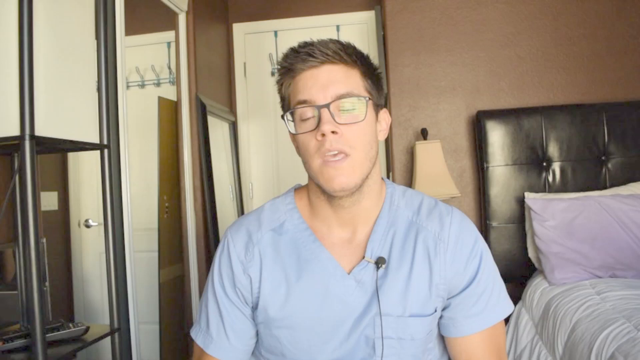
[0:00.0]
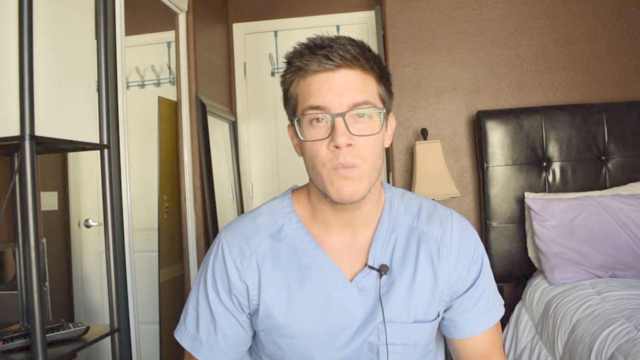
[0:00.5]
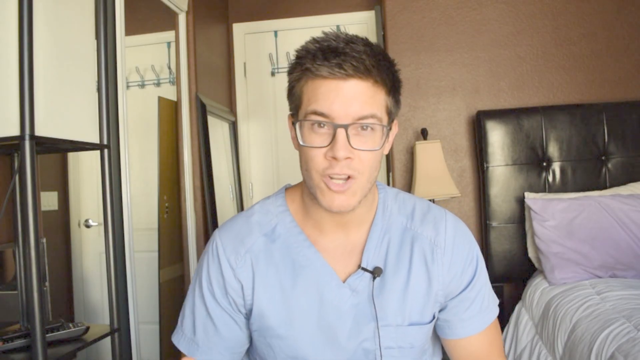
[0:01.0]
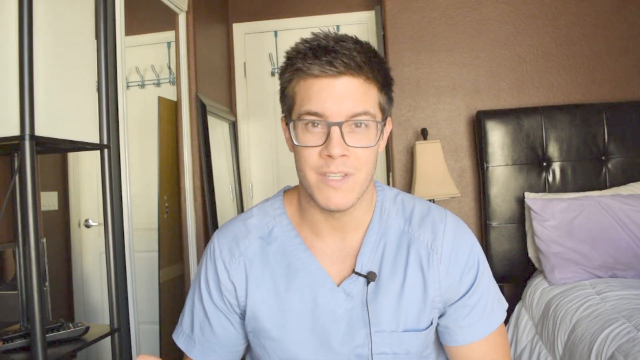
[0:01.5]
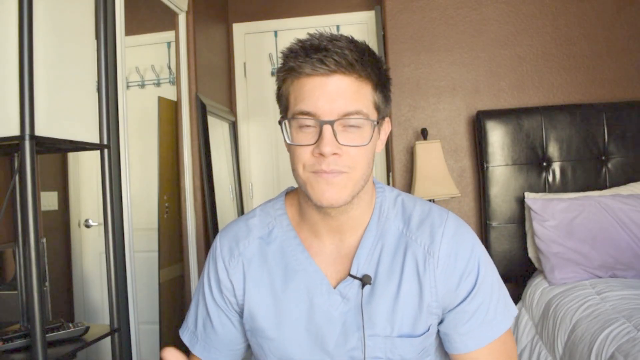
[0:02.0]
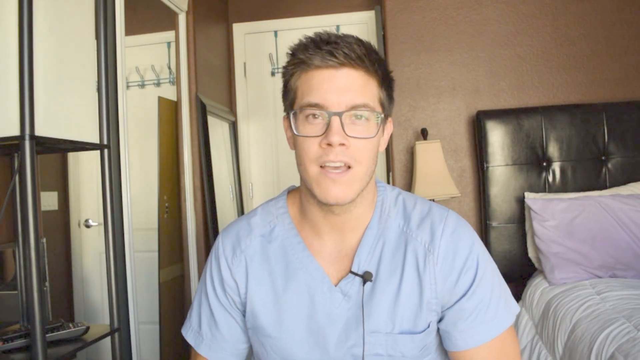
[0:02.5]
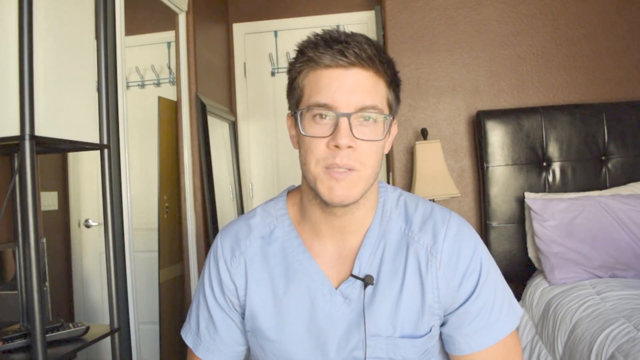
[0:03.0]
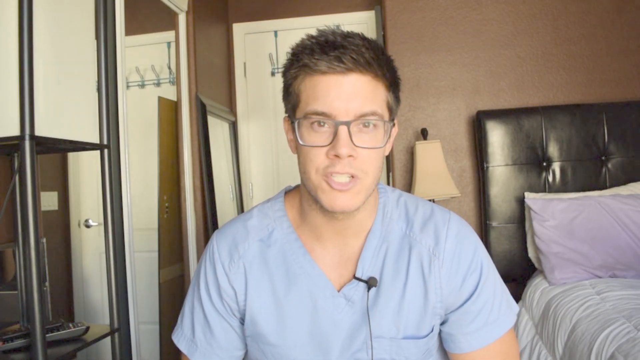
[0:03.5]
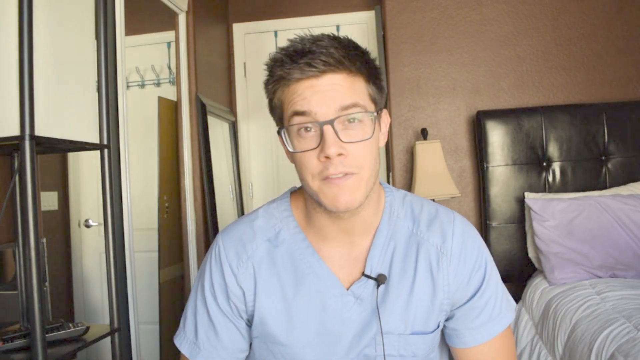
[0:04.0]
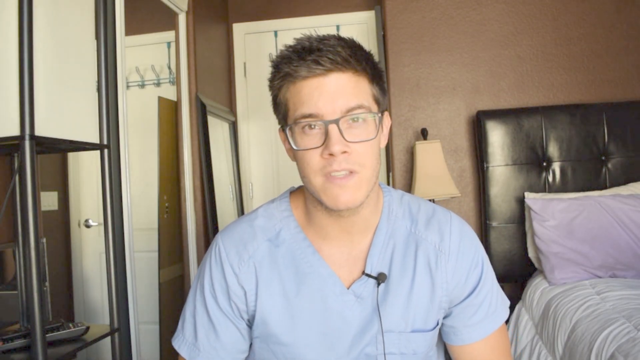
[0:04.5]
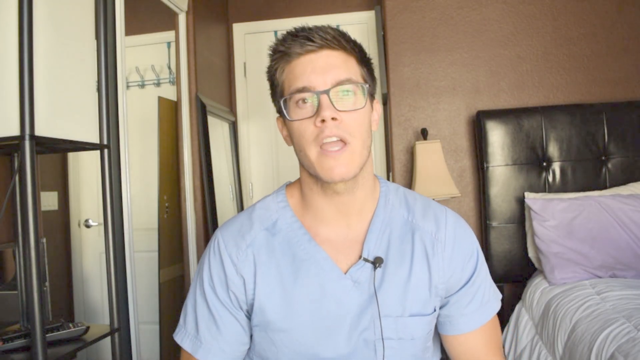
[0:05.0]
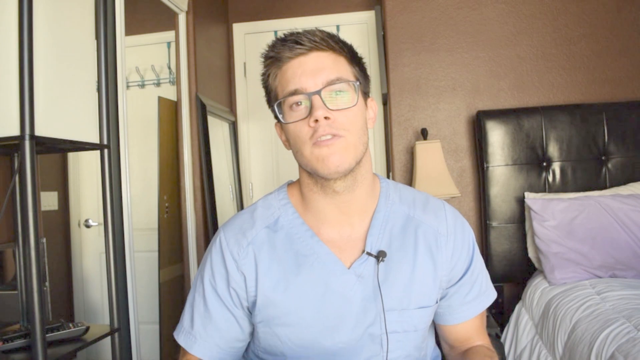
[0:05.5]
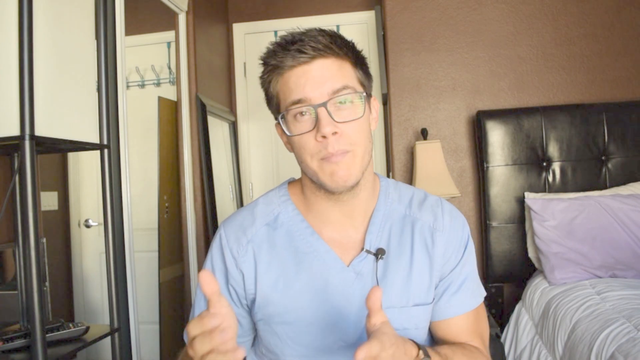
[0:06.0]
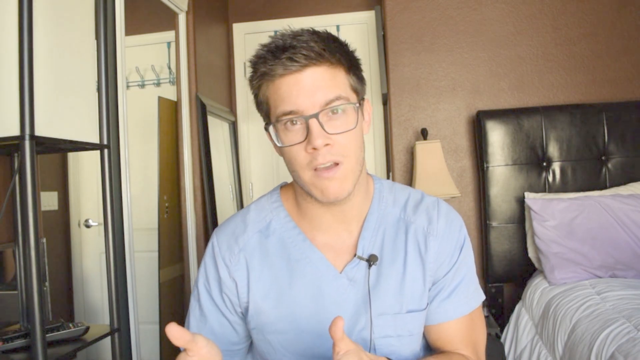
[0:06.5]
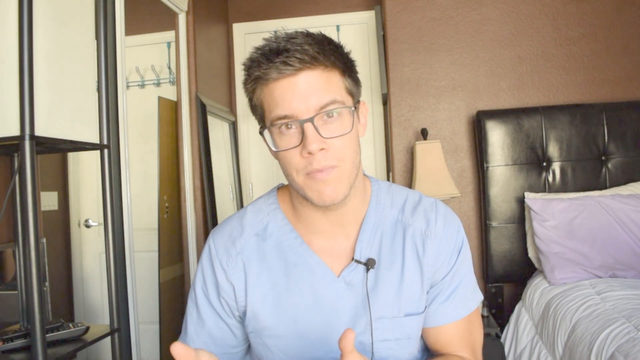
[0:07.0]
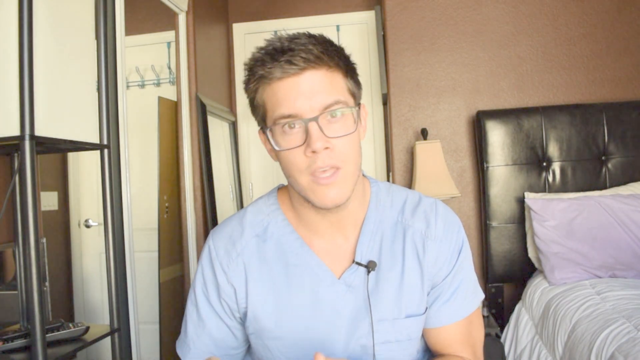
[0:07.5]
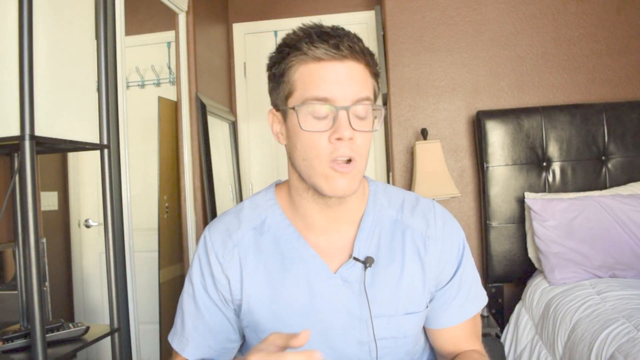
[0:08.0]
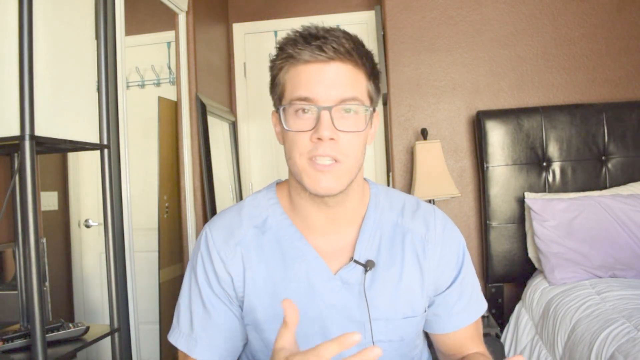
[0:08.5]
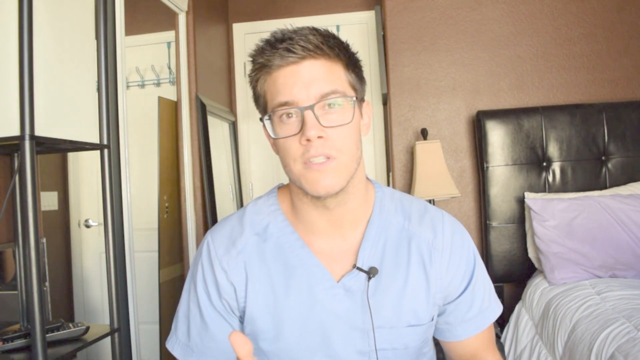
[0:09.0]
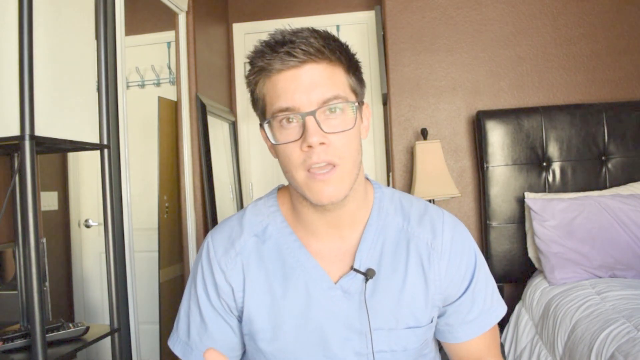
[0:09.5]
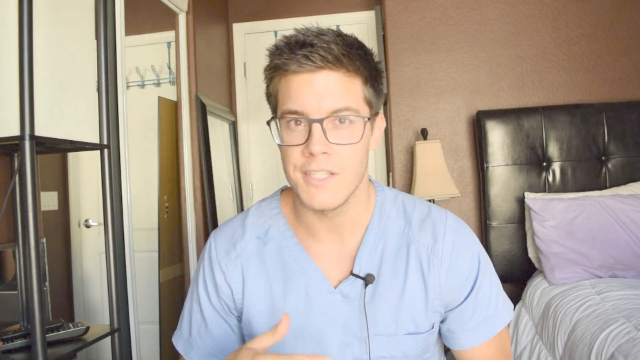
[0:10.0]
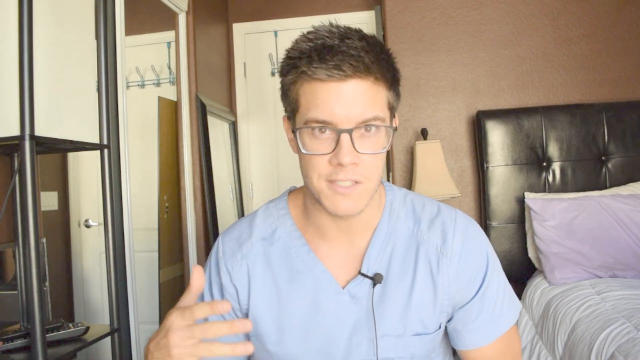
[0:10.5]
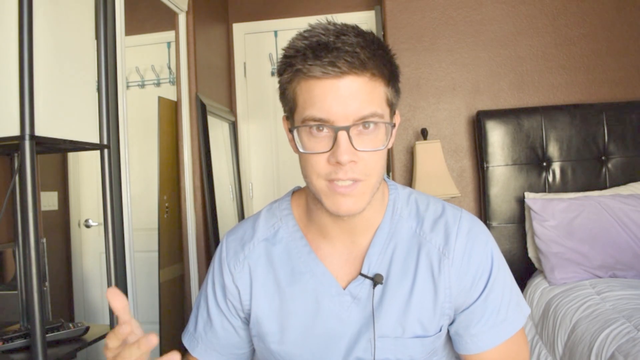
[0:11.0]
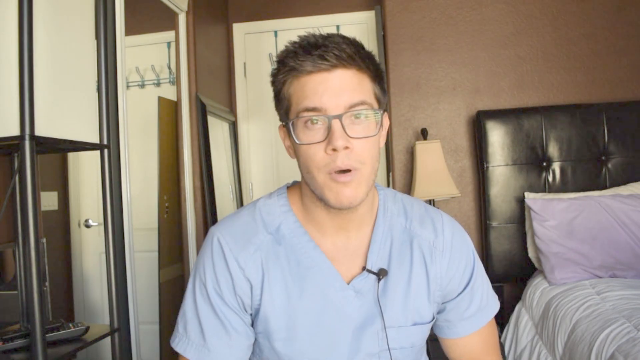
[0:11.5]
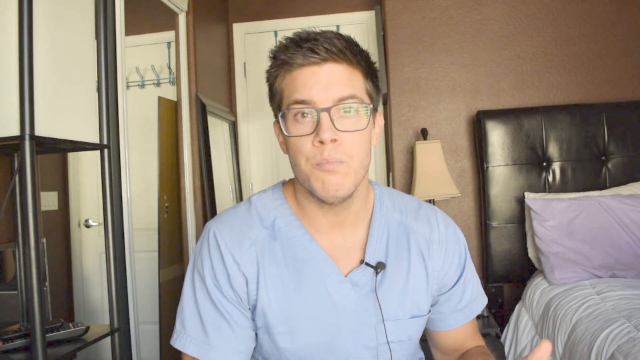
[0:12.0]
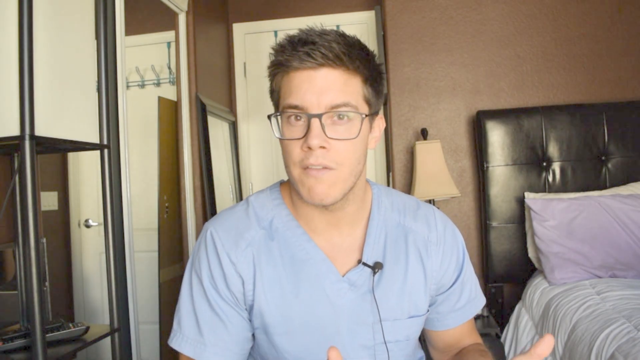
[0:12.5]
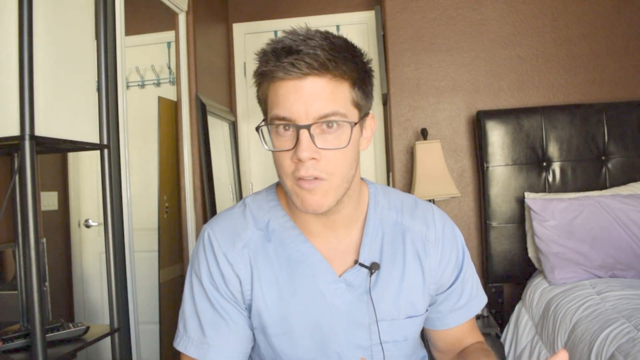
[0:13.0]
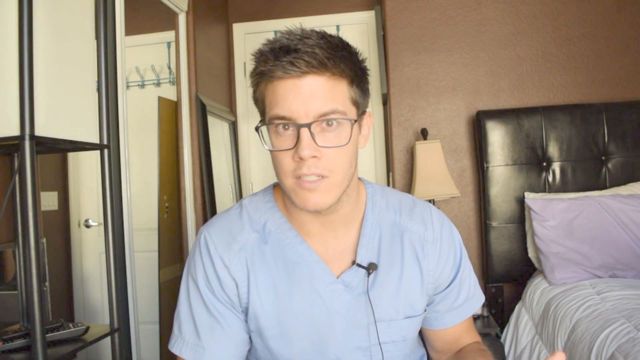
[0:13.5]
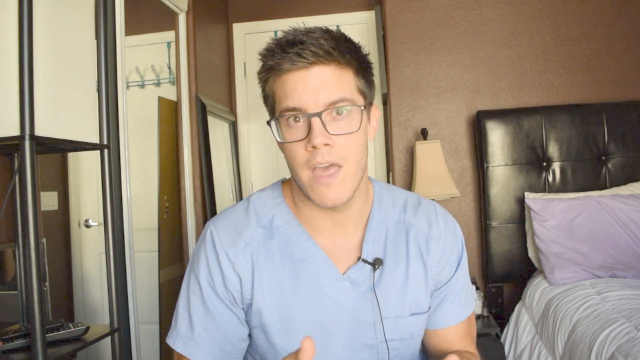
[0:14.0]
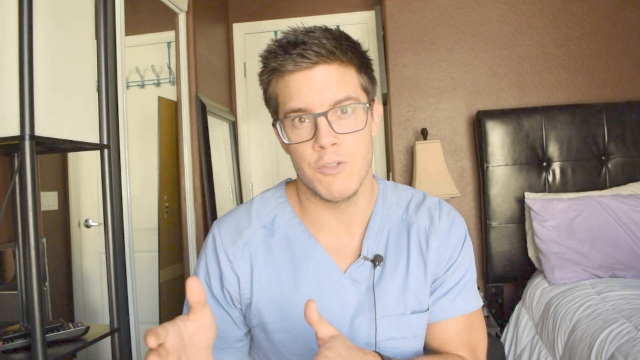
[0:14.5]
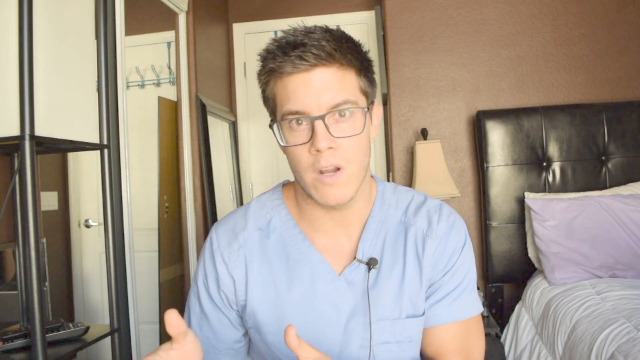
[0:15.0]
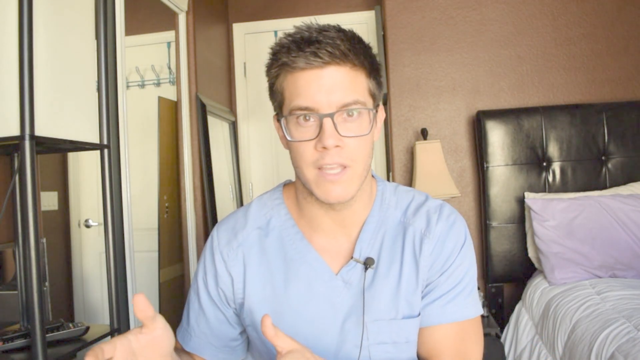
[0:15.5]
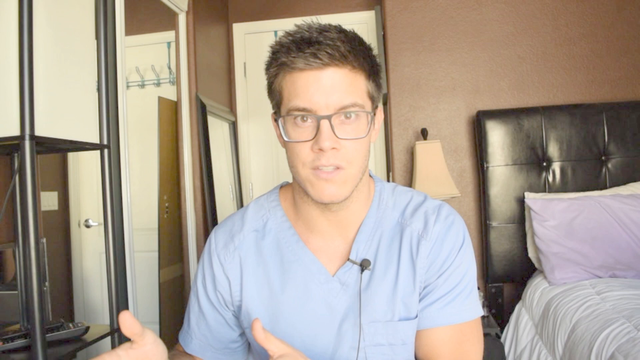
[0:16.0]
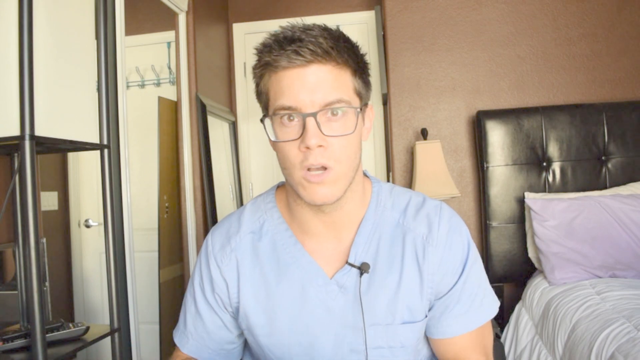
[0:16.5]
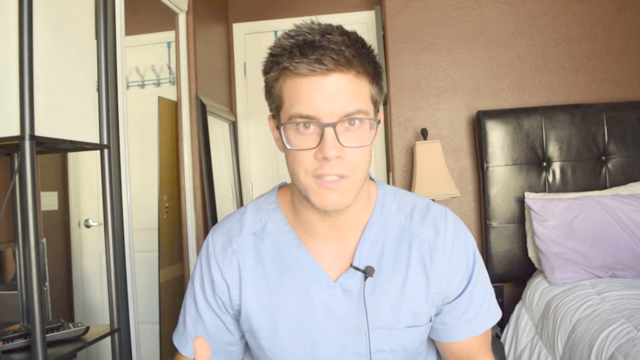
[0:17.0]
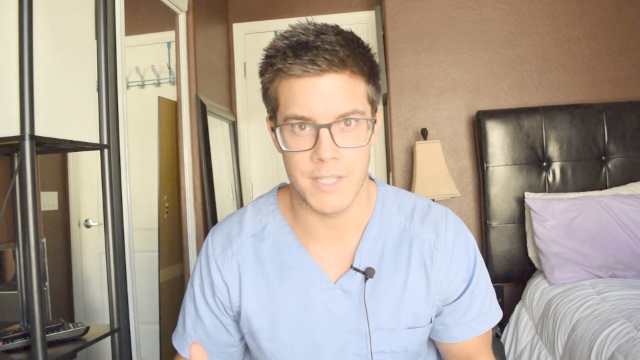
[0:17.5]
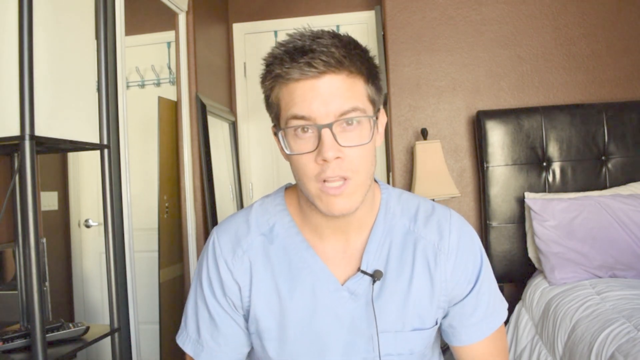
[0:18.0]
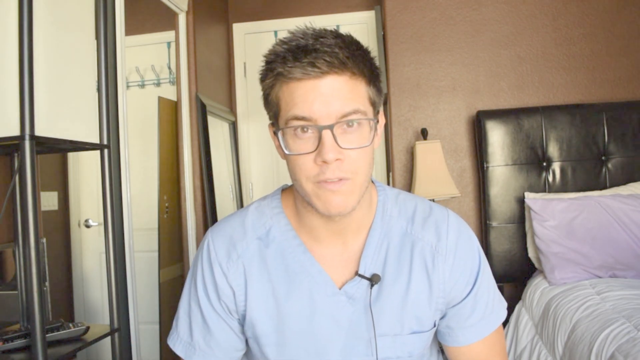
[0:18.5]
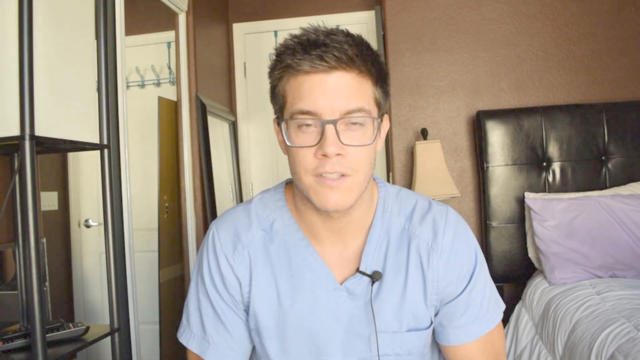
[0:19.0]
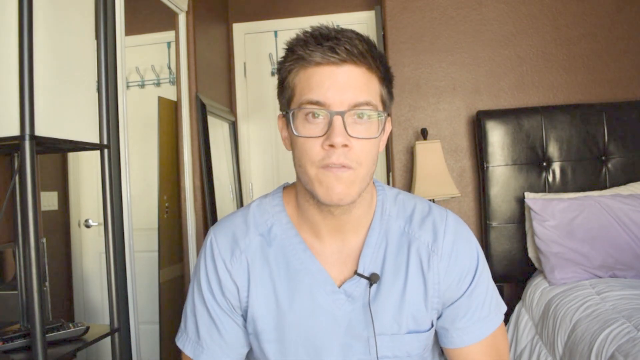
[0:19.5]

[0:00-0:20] Someone seems to be a medical professional, judging by the dress. The setting seems to be a bedroom, where a boy is giving a lecture, apparently about something specific. In the background of the room there is a bed, a lamp, and some other things.